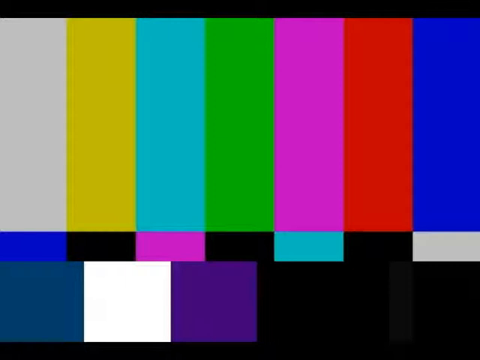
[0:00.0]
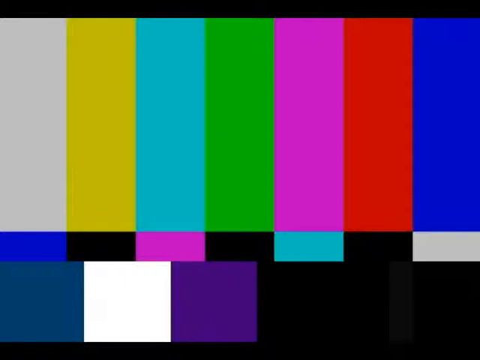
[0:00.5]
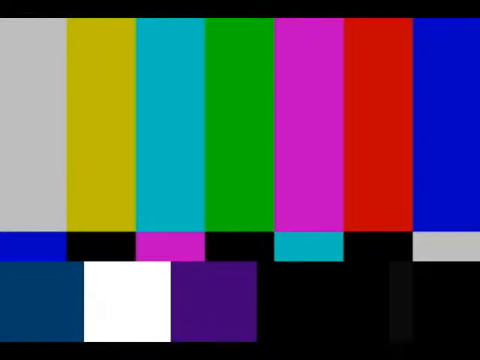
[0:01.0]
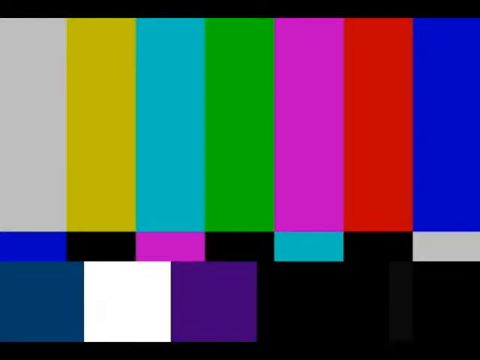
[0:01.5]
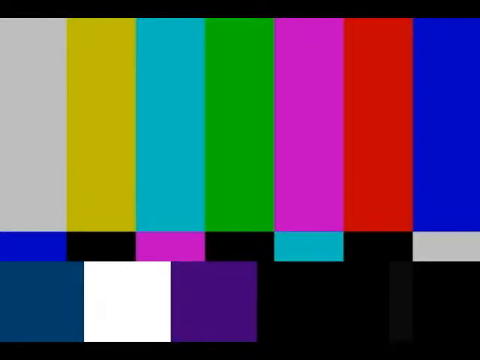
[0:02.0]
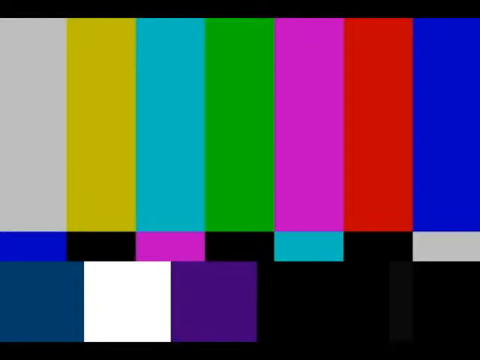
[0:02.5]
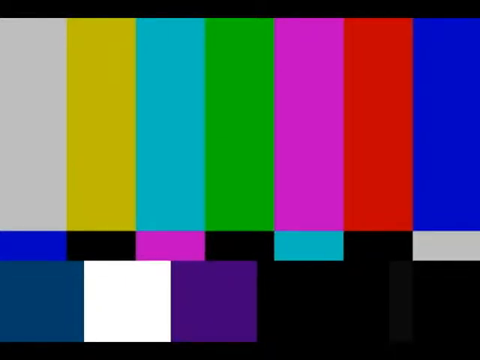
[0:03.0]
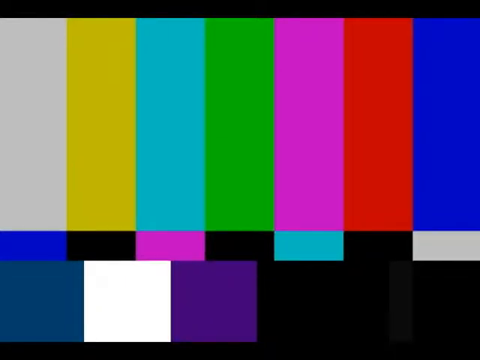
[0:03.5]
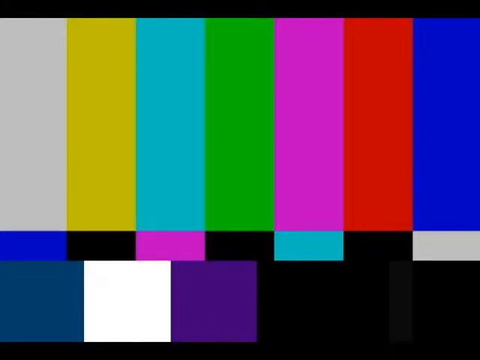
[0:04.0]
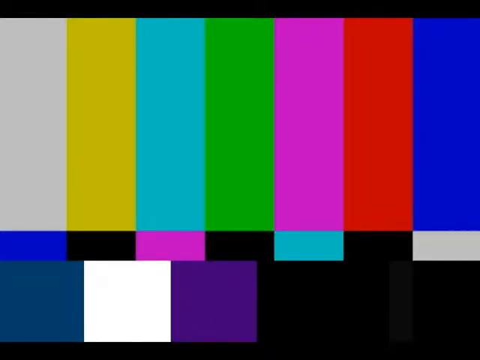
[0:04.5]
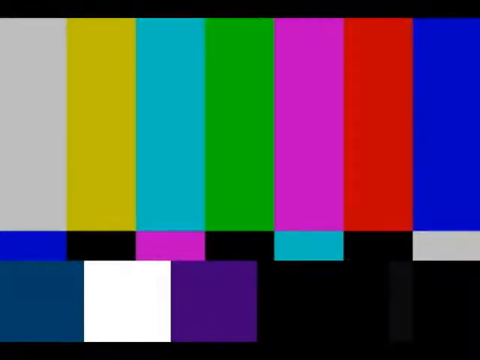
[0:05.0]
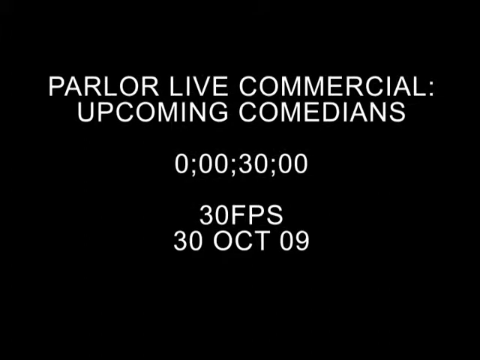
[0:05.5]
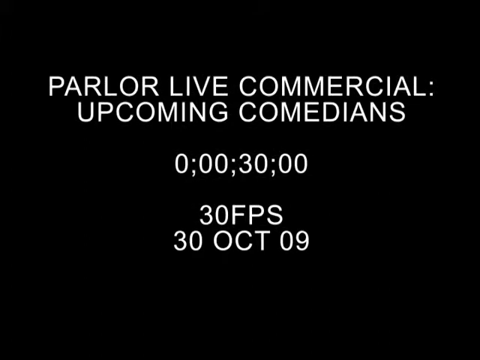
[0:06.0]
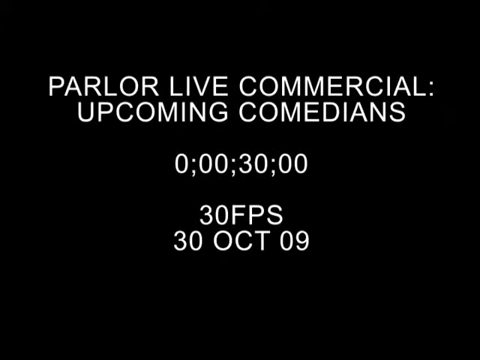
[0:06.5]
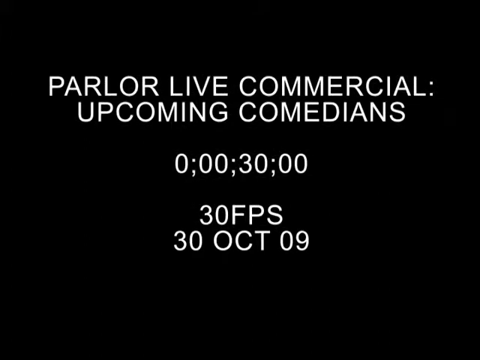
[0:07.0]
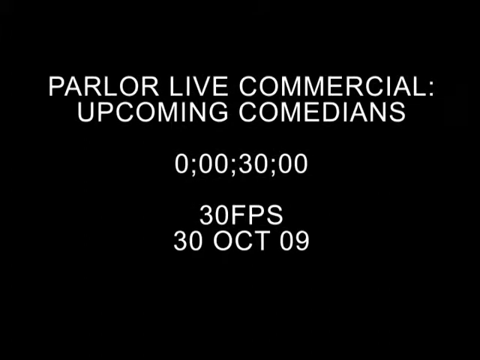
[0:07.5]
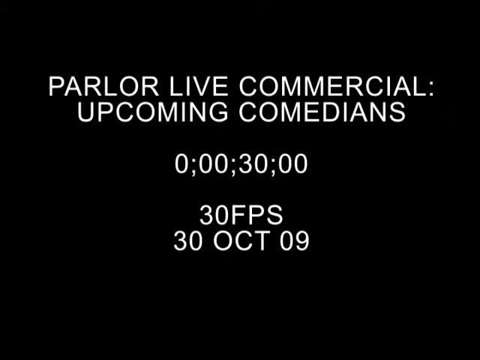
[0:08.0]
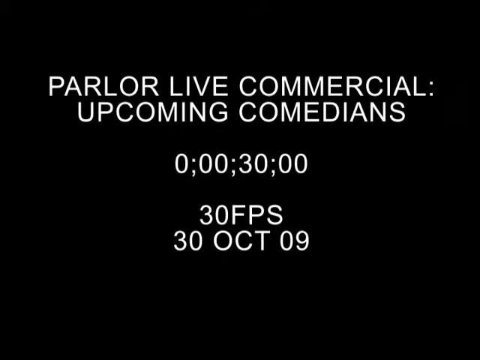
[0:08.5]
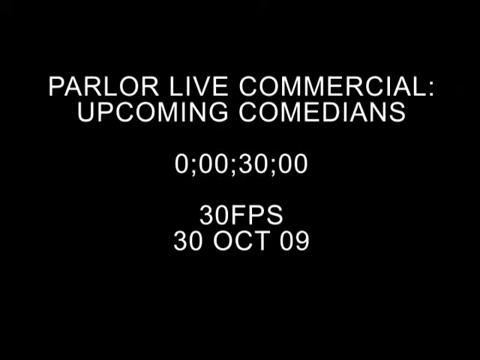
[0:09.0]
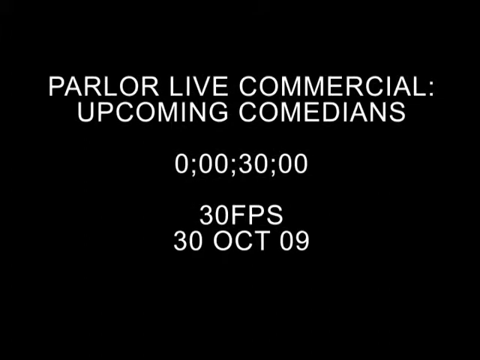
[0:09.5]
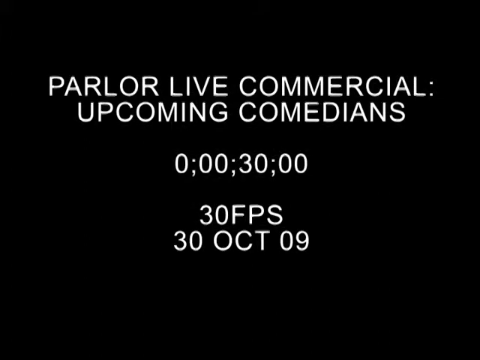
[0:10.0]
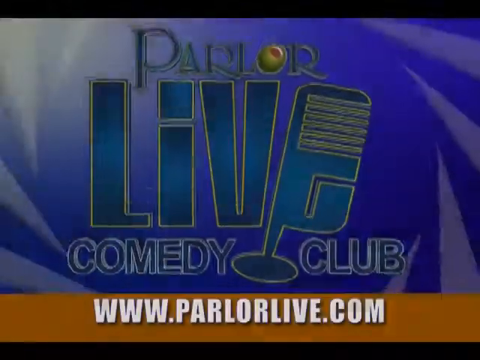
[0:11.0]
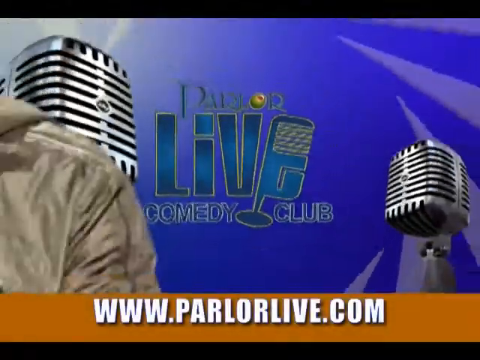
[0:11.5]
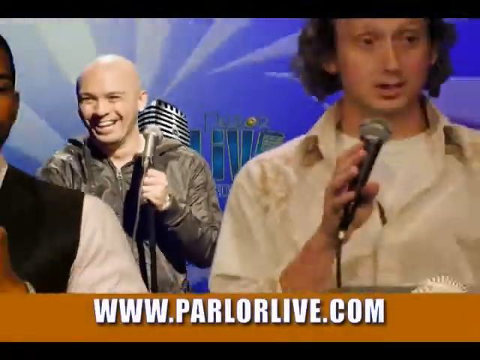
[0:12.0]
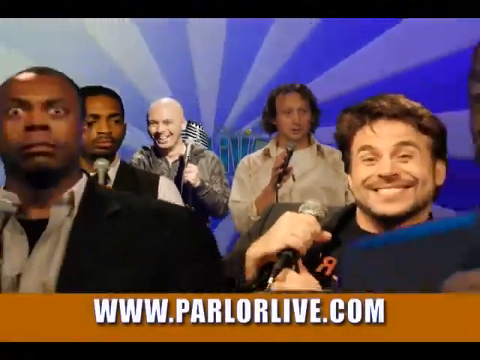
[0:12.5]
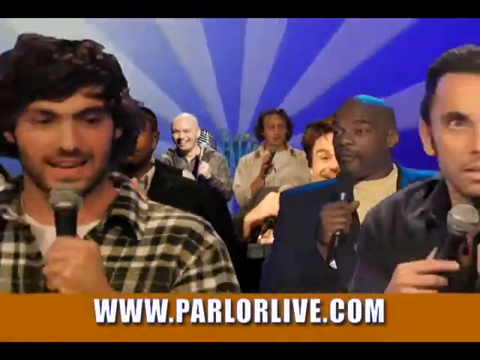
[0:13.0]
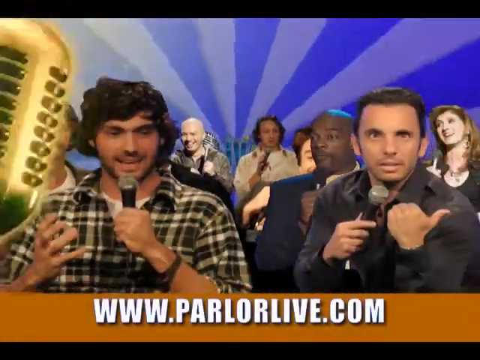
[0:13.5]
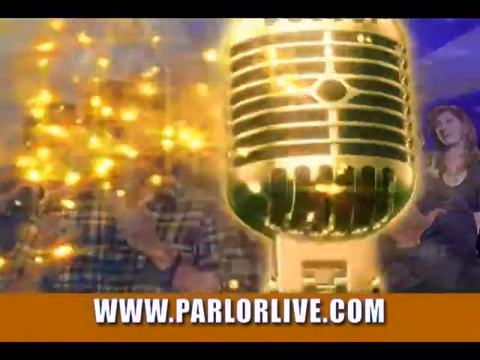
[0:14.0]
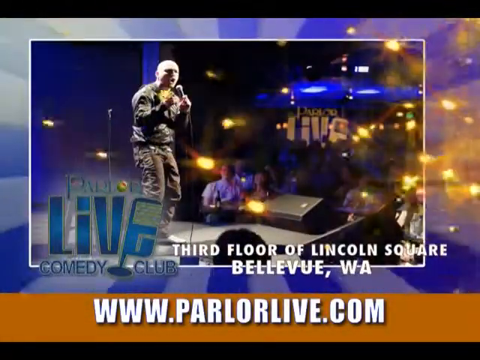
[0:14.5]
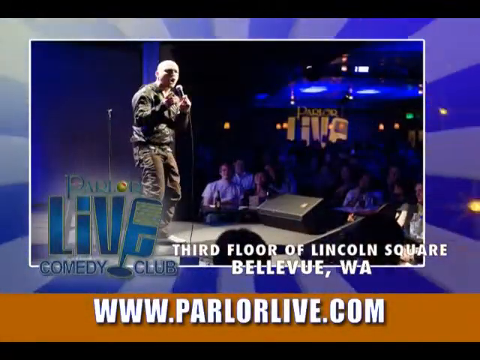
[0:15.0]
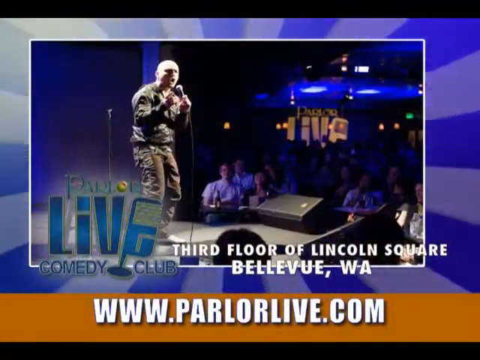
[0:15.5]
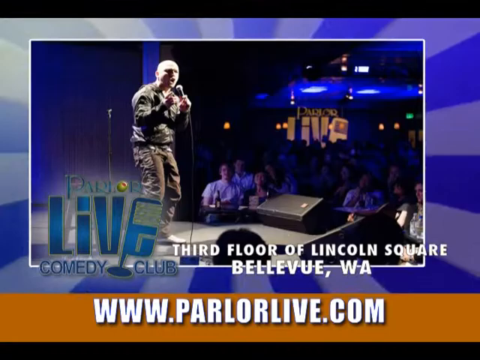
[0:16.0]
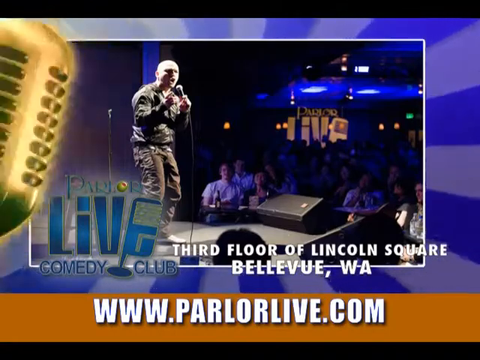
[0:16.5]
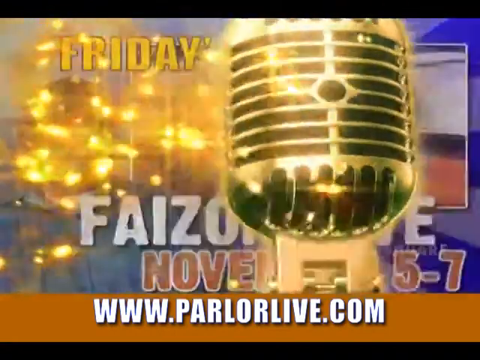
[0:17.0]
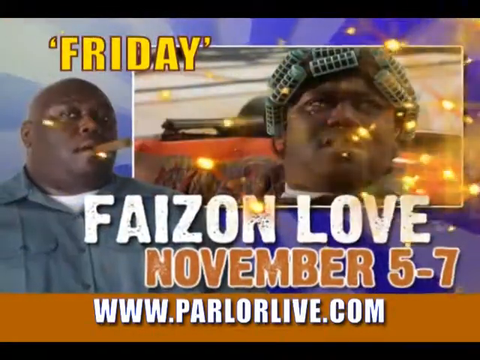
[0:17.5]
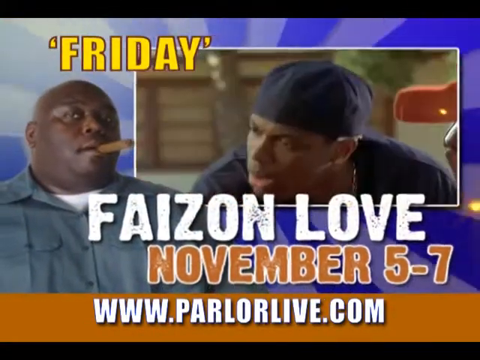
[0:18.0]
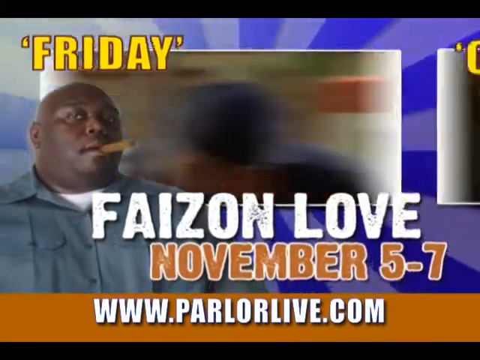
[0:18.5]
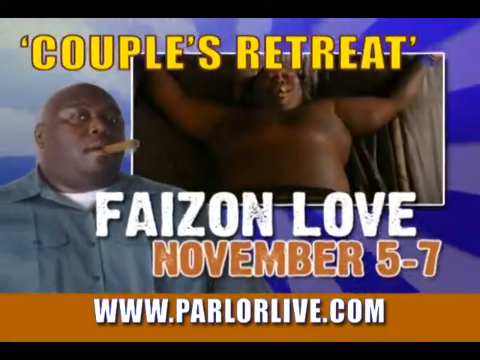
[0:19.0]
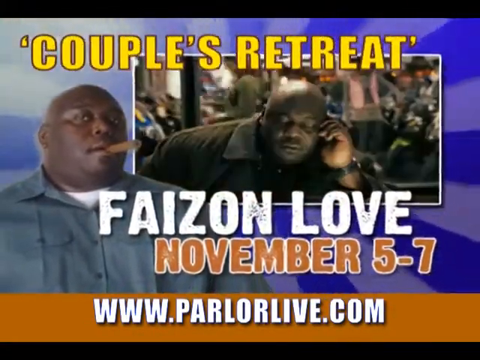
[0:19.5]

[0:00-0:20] The video opens with a colorful image in yellow, white, green, pink, red and blue. It is an advertisement for Parlor Live, a live commercial for upcoming comedians, introducing a live show on the third floor of Lincoln Square, Bellevue, WA. The title is "Couples Retreat" at Parlor Live, running November 5th to 7th, and the website www.parlorlive.com is shown. A photo of a huge guy appears, followed by a man presenting in a live show with people listening to him. Photos of different performers holding their microphones and posing with them are also shown.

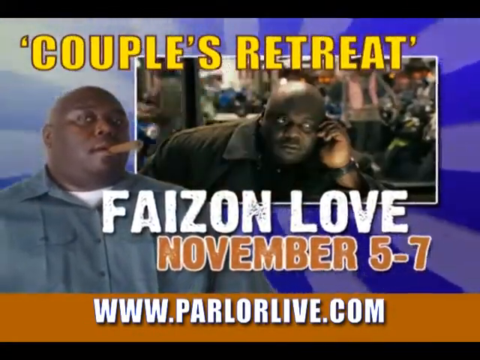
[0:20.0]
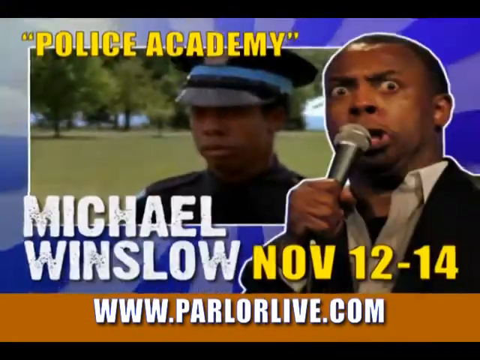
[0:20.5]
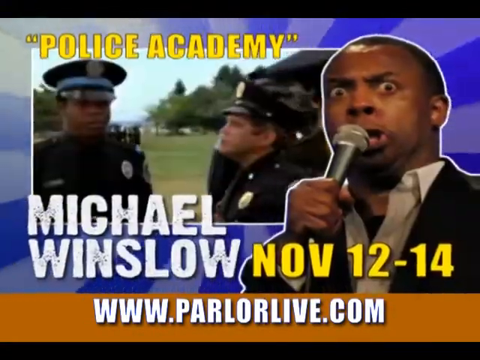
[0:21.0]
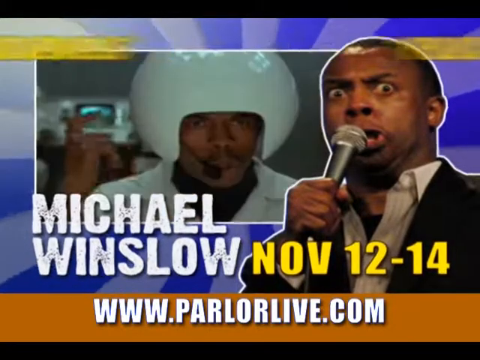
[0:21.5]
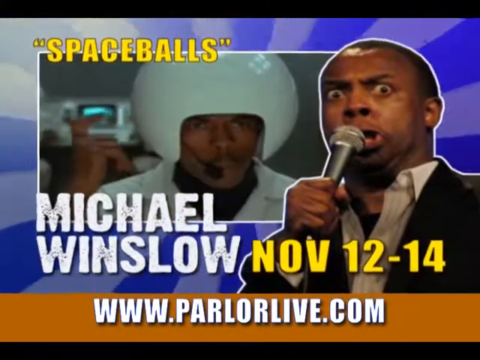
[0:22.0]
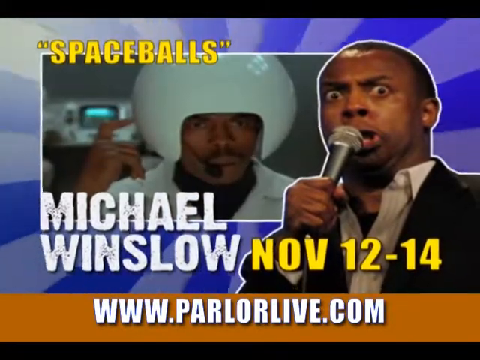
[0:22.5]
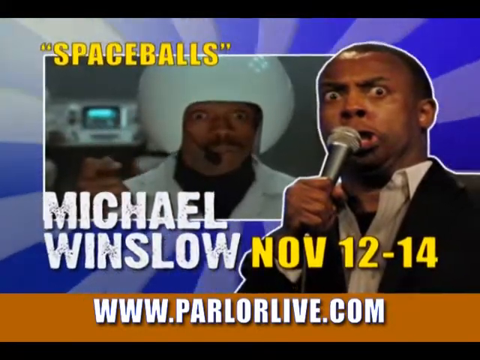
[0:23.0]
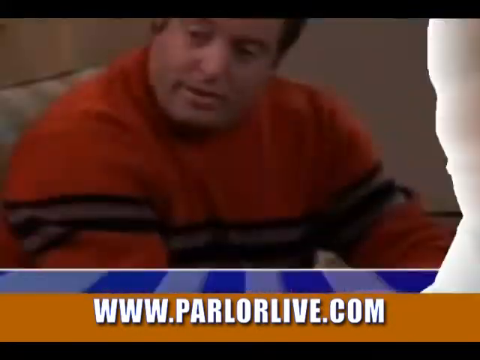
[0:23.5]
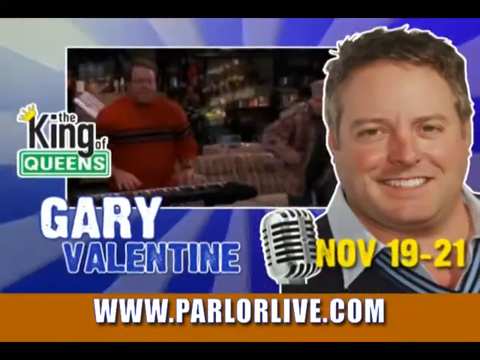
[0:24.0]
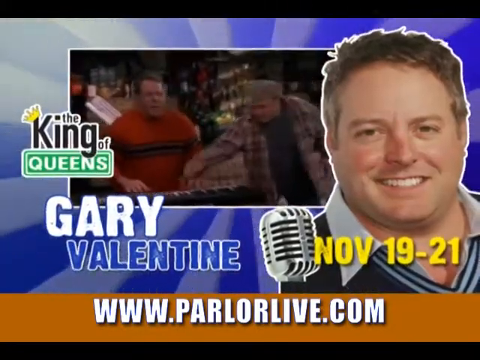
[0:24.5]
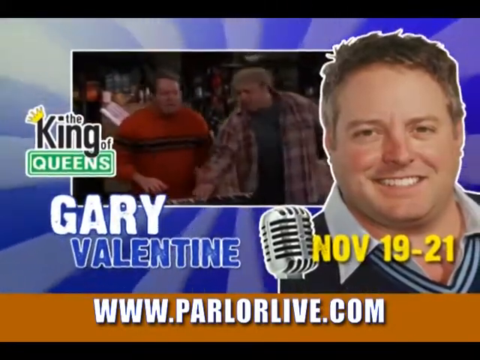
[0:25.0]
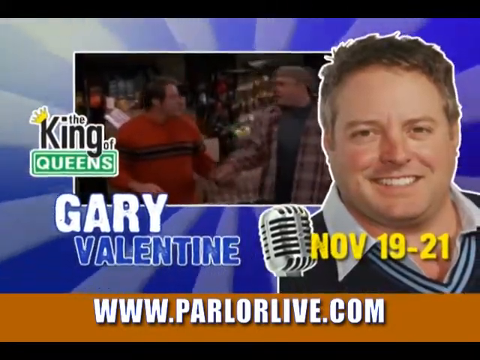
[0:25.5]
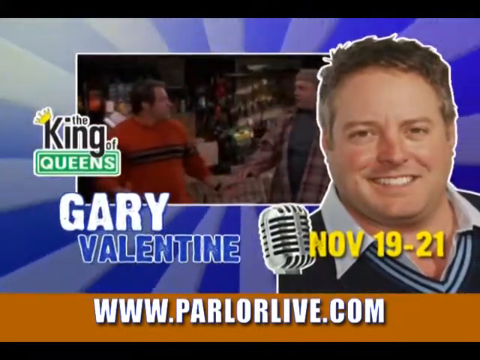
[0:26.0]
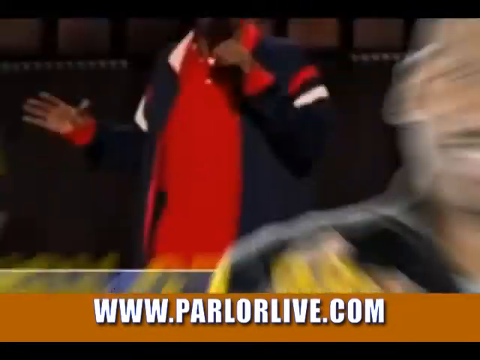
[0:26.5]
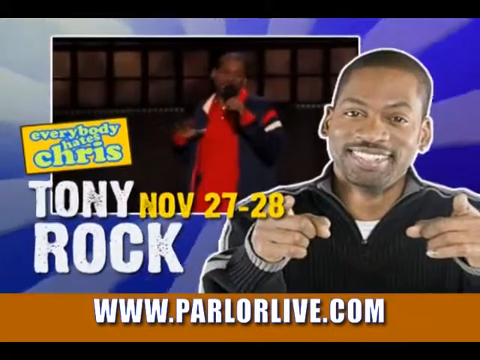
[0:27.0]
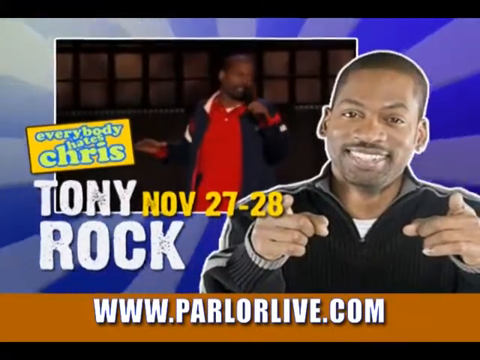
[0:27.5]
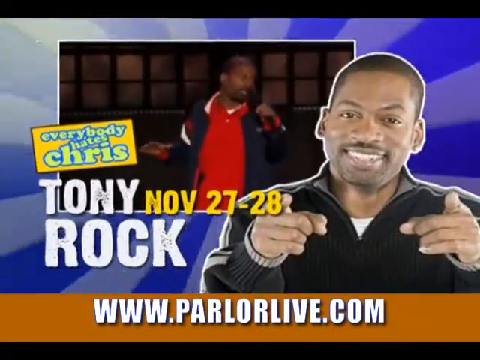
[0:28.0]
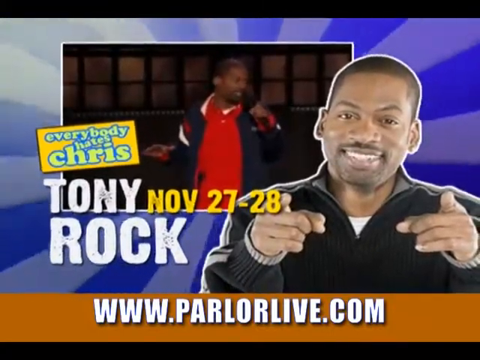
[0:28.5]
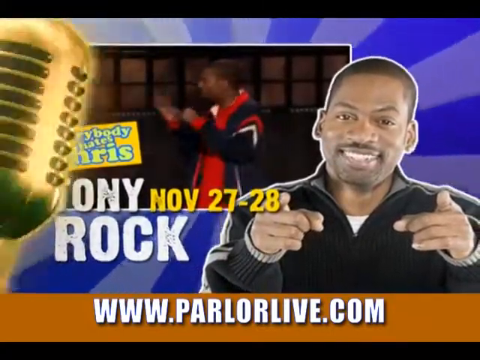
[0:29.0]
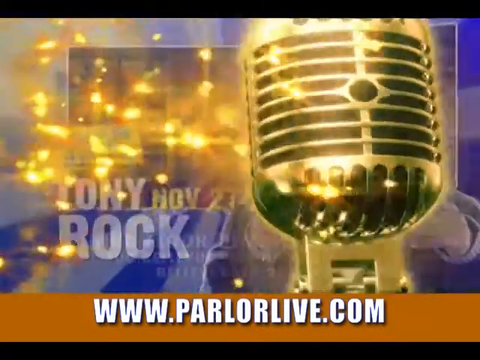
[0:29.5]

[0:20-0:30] The advertisement lists upcoming shows: Police Academy and Spaceballs presented by Michael Winslow on November 12–14, with the website www.parlorlive.com. Images of a police officer, Spaceballs and Michael Winslow appear. Gary Valentine of King of Queens is listed for the 19th to 21st, and Tony Rock of Everybody Hates Chris for November 27th to 28th. The different performers and their dates are shown one after another.